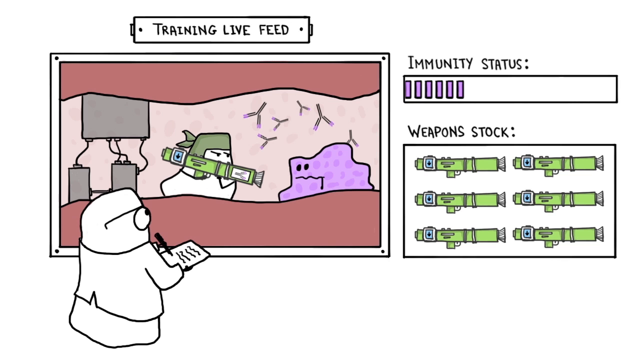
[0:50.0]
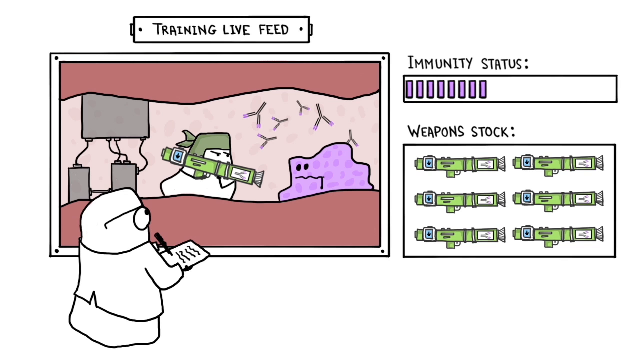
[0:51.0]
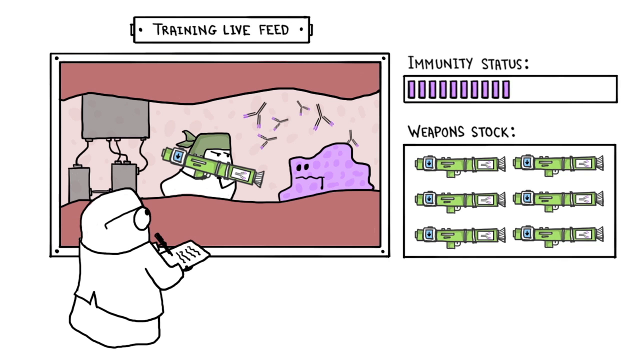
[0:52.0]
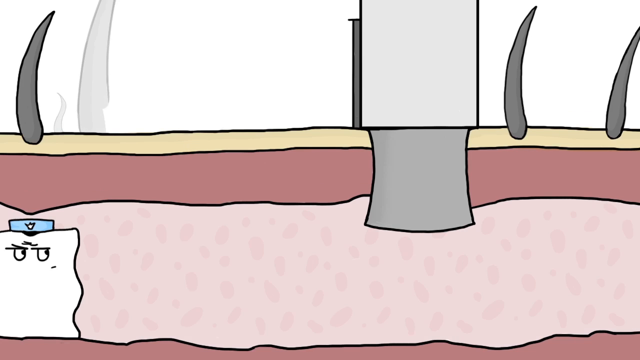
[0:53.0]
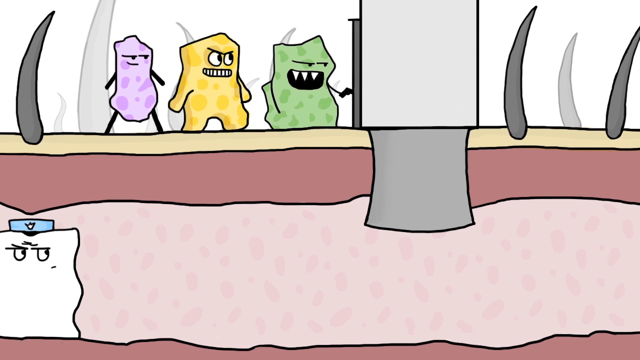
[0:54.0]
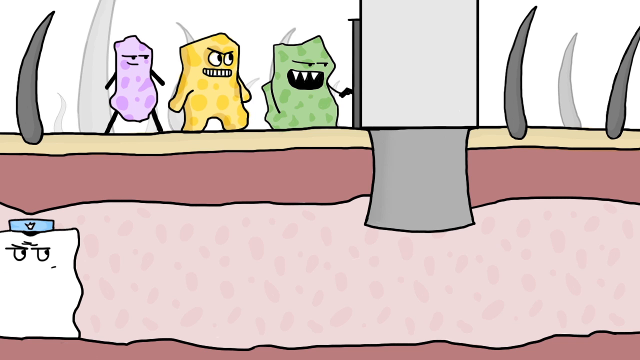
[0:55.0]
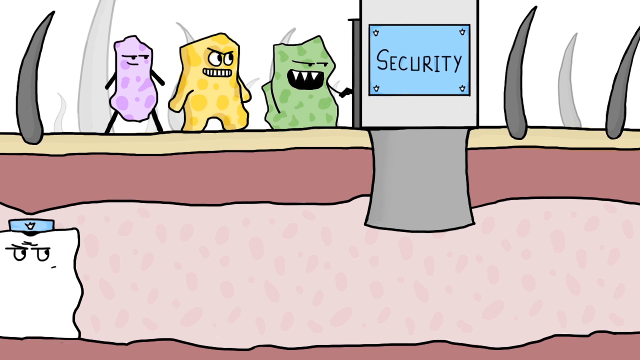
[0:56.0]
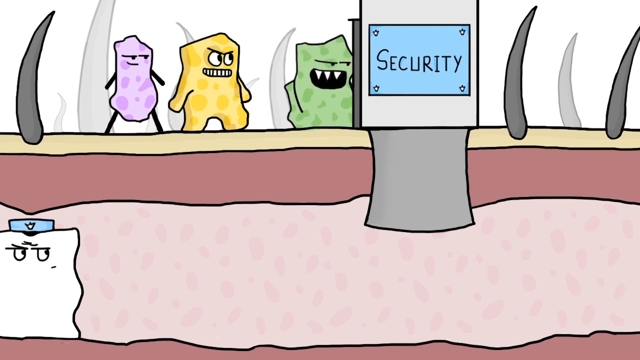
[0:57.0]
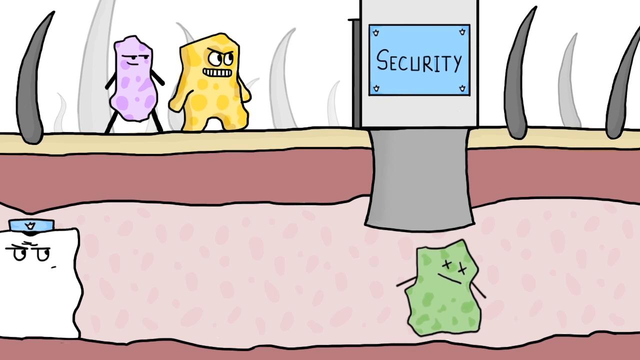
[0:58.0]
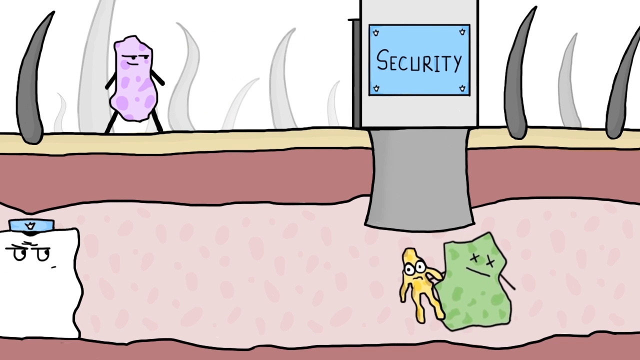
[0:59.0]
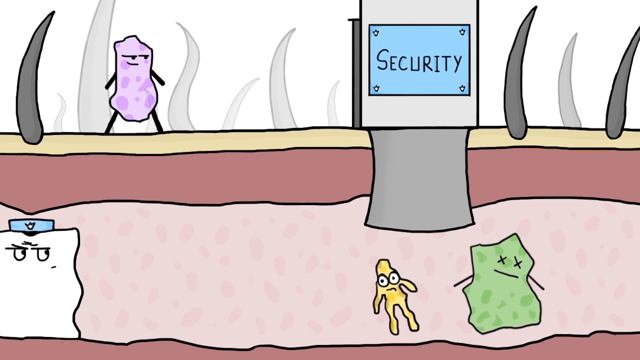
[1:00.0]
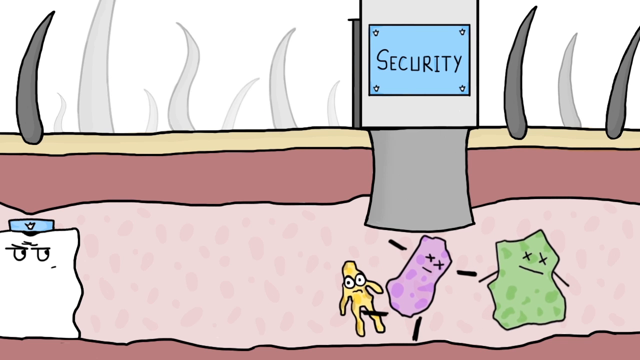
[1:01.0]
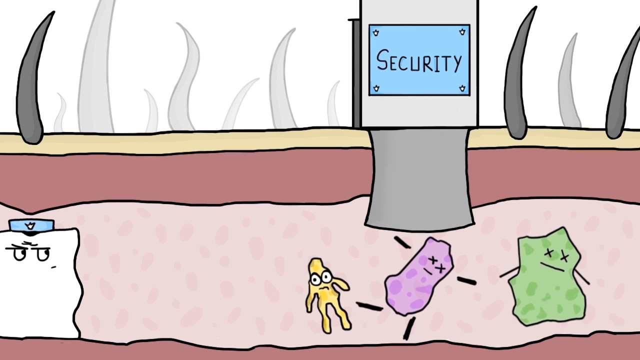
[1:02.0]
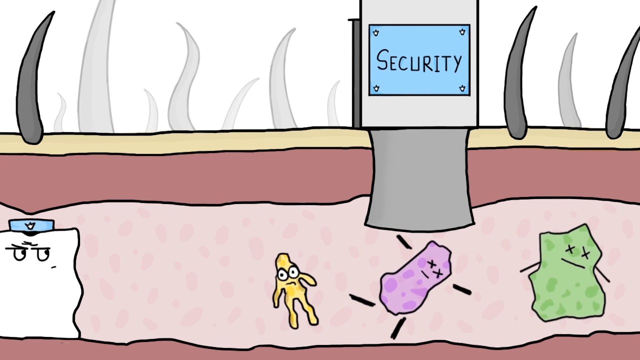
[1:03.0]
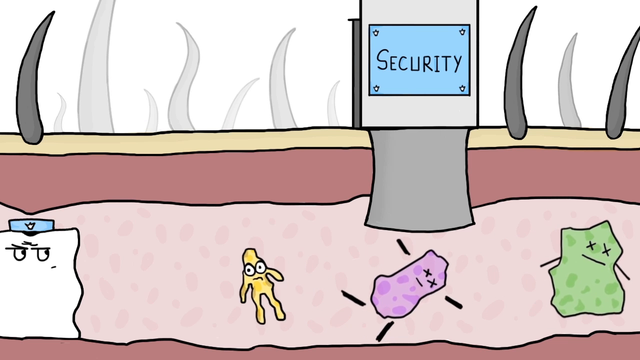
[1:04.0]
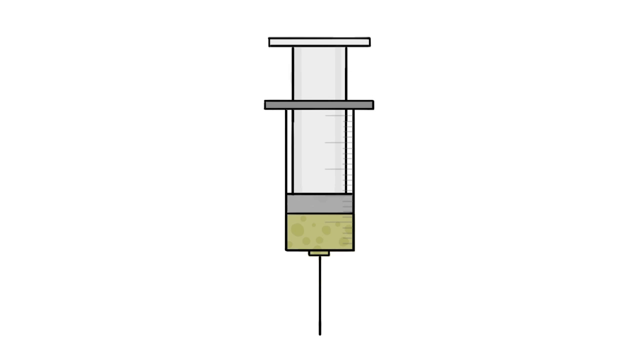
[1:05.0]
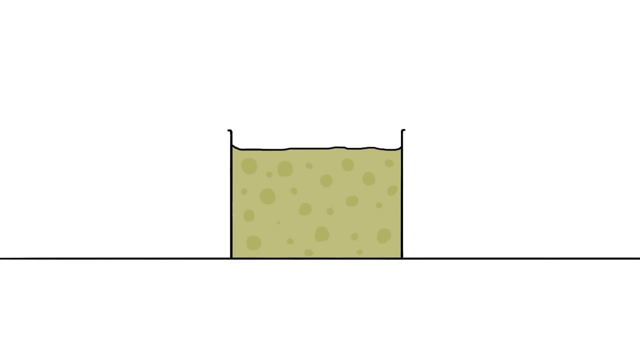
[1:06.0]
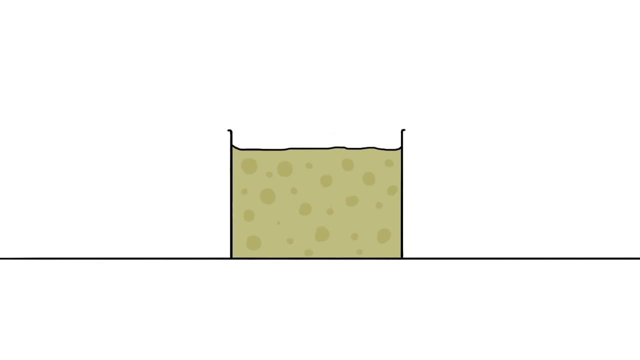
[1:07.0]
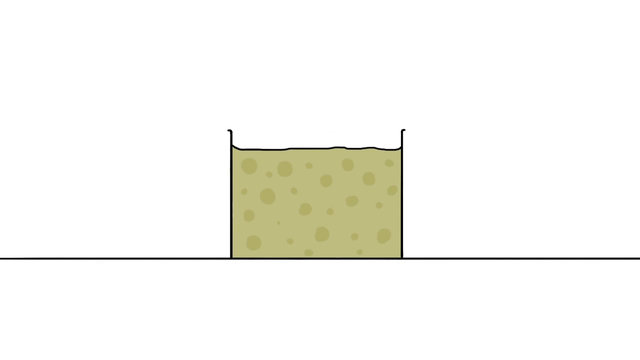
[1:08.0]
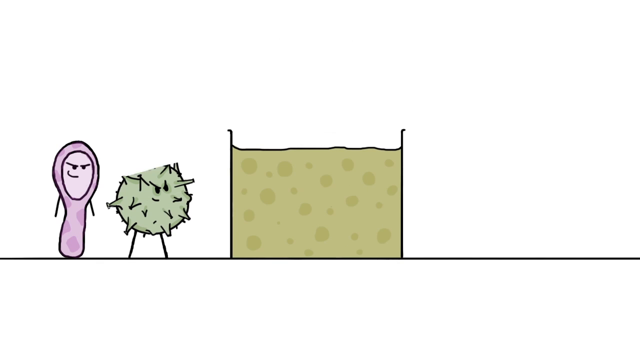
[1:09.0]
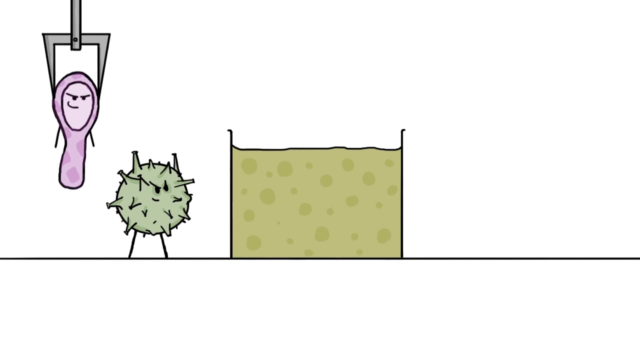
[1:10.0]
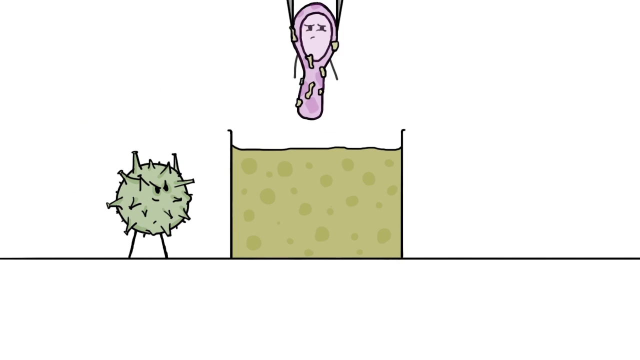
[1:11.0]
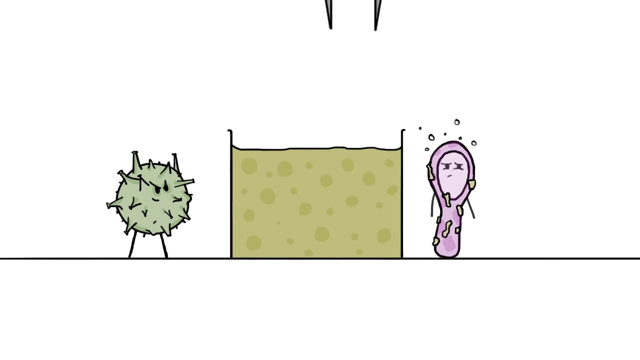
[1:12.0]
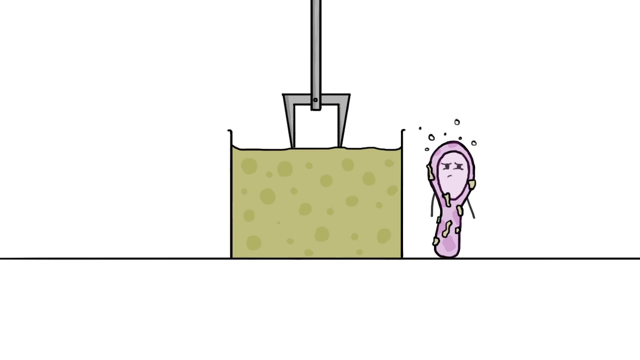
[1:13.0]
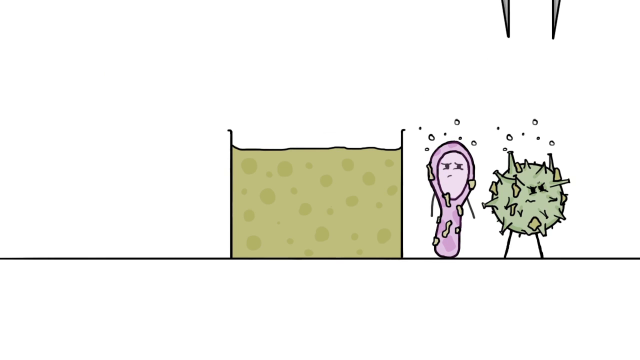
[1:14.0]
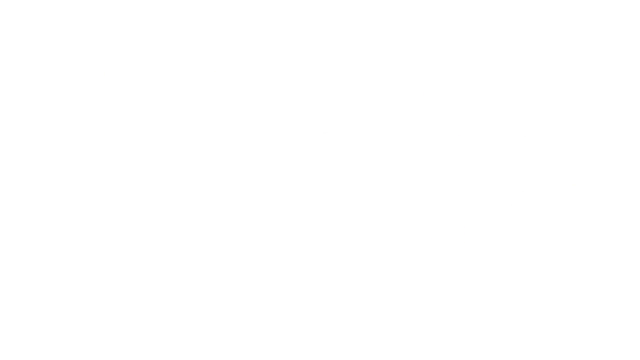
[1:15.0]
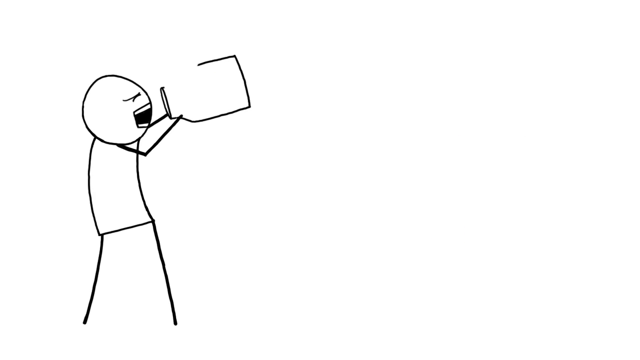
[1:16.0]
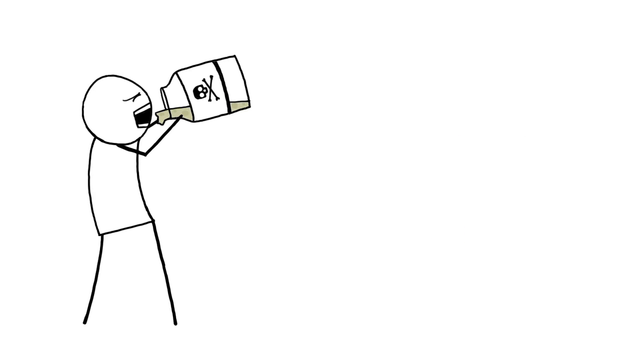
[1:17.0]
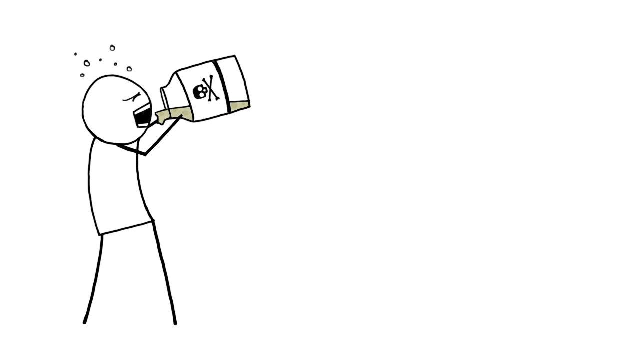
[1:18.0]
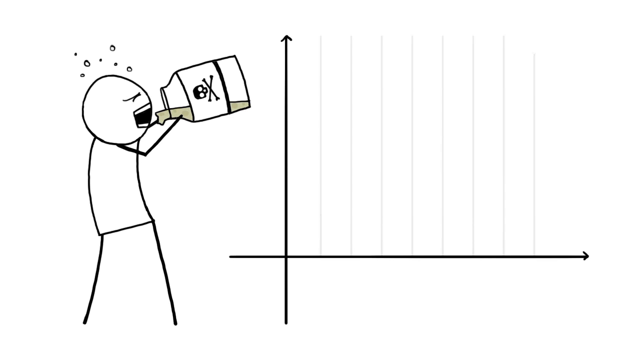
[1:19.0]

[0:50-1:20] Three little monsters, a green one, a yellow one and a purple one, are on top of what looks like hair follicles, passing through a security checkpoint while a security guard in a blue hat watches from below. The security sign is a blue square. They all come down the security tube and change colour as they reach the bottom. The green and purple ones seem to have died, while the yellow one seems to have changed. A syringe with green liquid appears and the view zooms in on the green liquid up close. A purple and a green monster appear to the left of the liquid; a grabber picks up the purple one, throws it into the liquid and picks it back up, and it seems to have killed him. The grabber does the same with the green one and kills him too. A little stick man then seems to be drinking a bottle of poison, and a chart appears on the side showing a syringe but no other data.